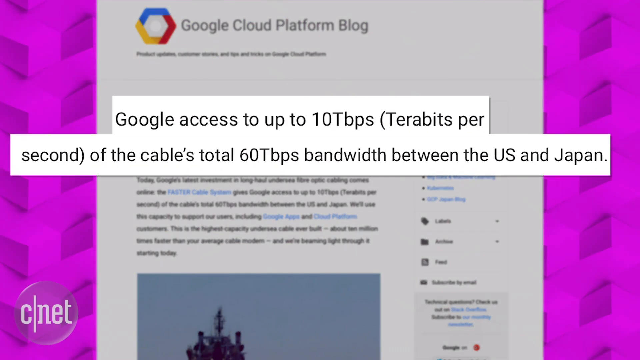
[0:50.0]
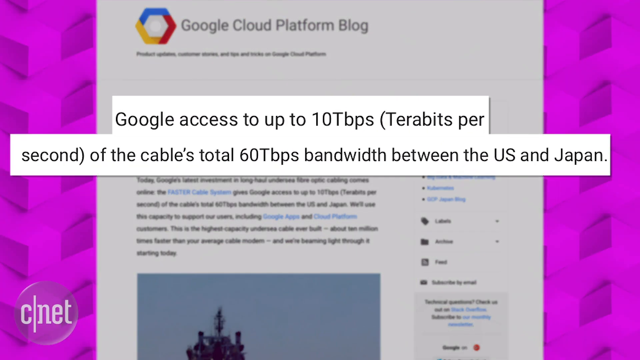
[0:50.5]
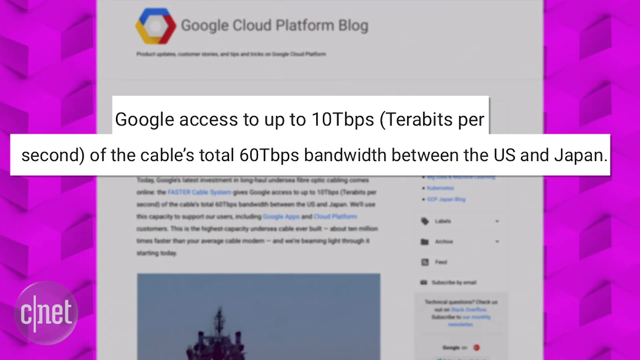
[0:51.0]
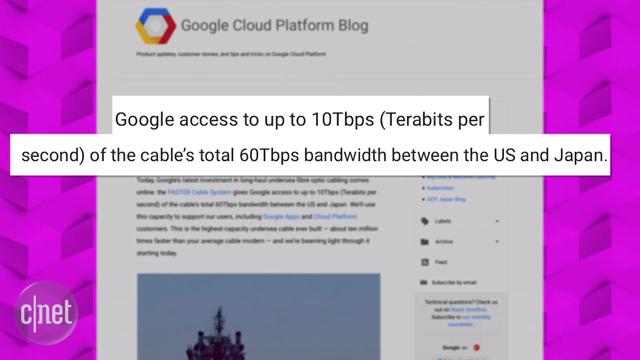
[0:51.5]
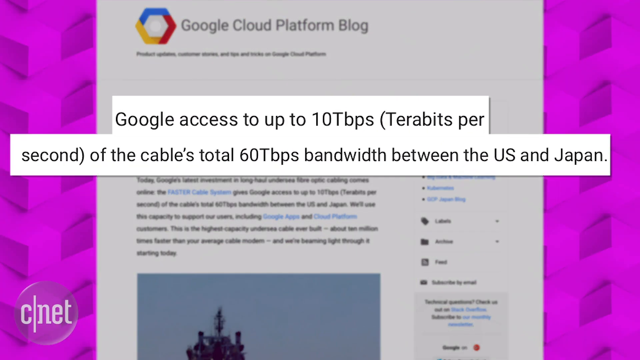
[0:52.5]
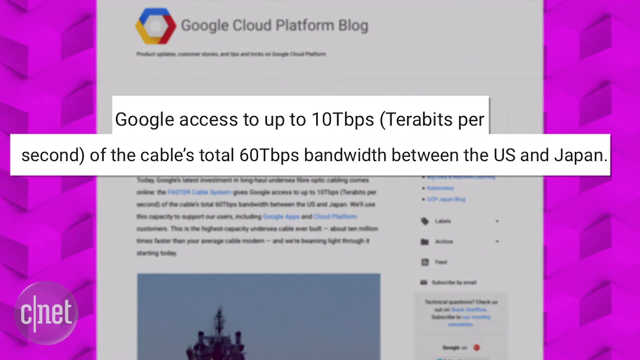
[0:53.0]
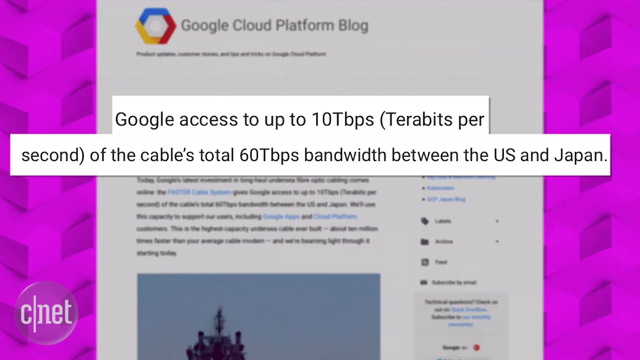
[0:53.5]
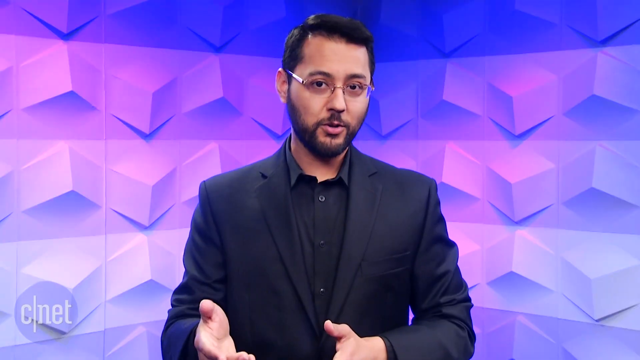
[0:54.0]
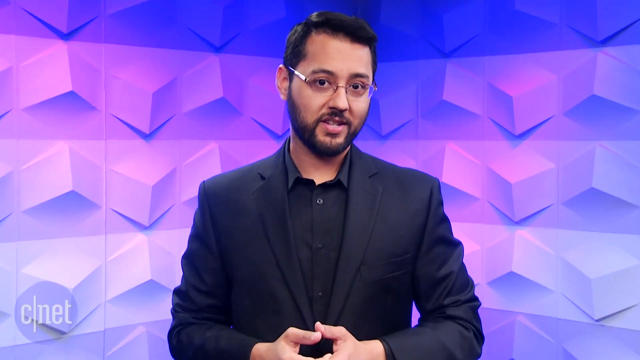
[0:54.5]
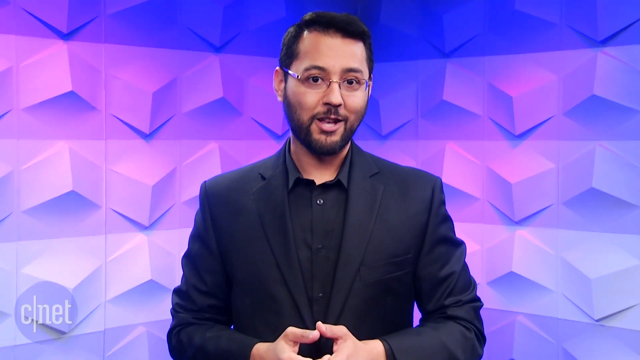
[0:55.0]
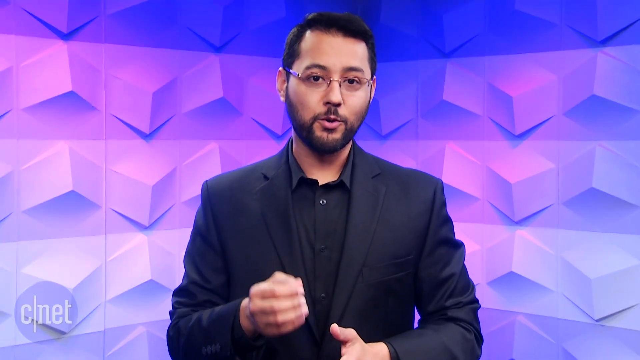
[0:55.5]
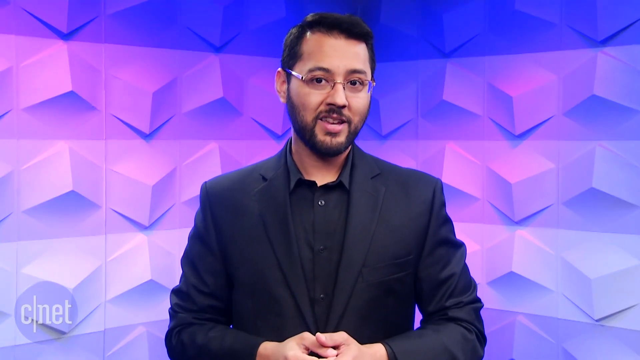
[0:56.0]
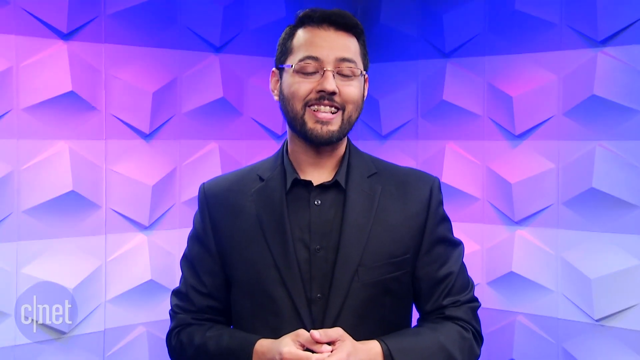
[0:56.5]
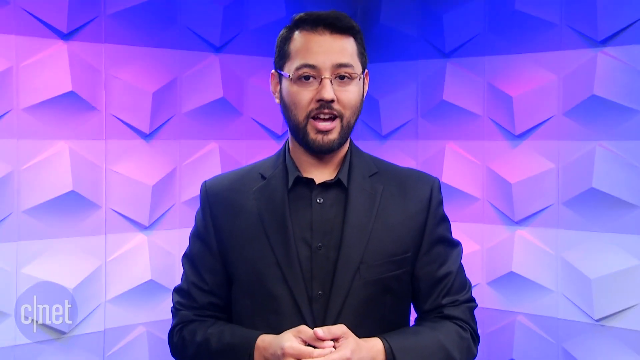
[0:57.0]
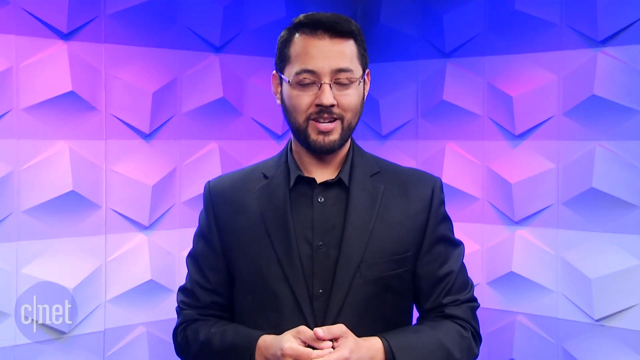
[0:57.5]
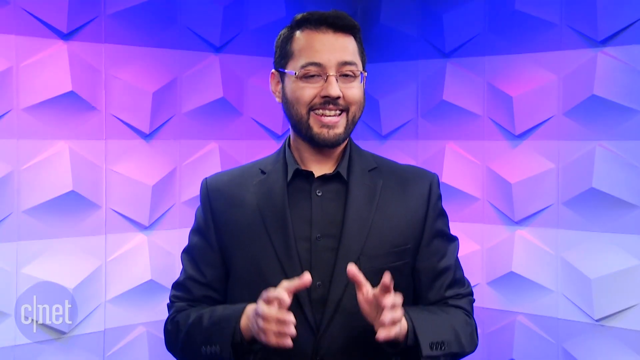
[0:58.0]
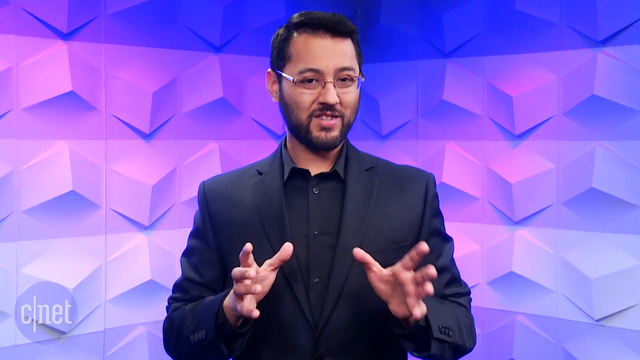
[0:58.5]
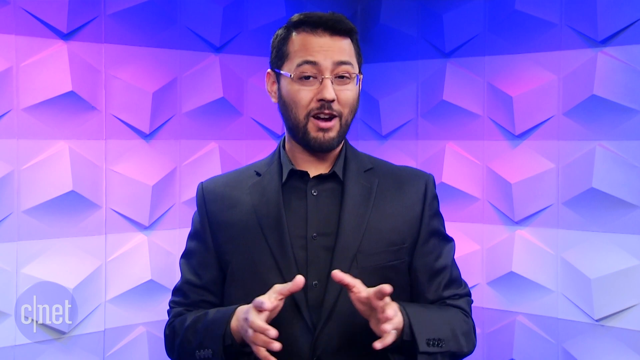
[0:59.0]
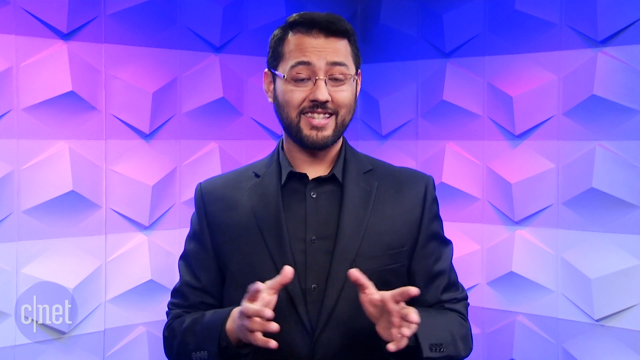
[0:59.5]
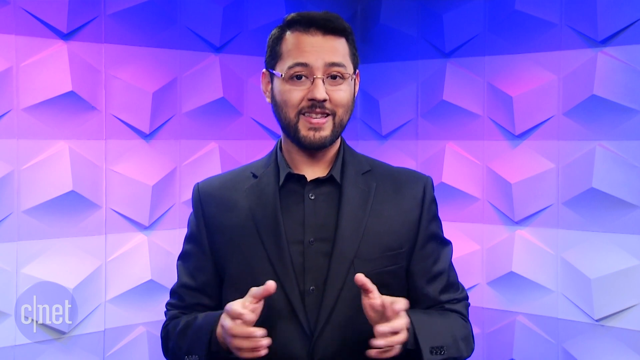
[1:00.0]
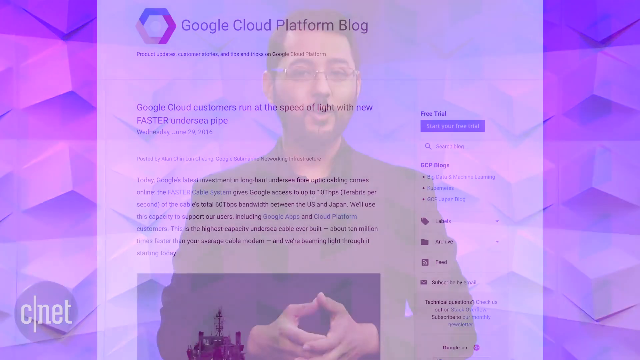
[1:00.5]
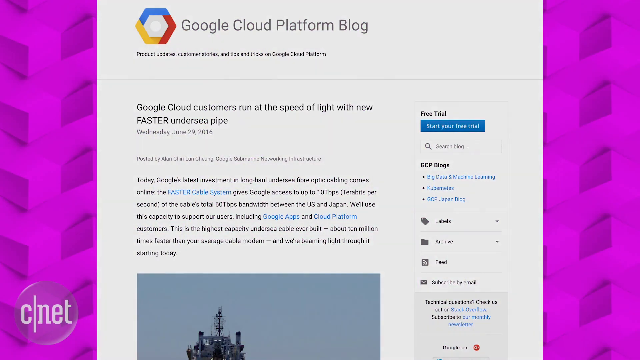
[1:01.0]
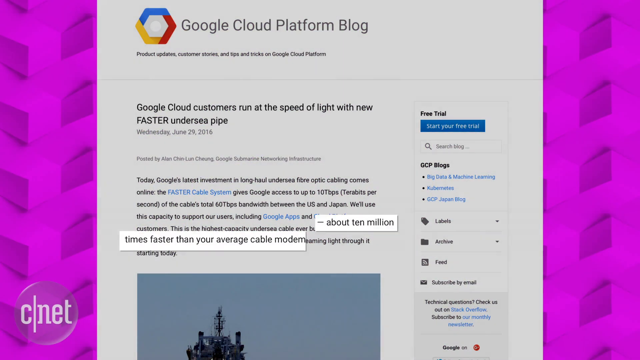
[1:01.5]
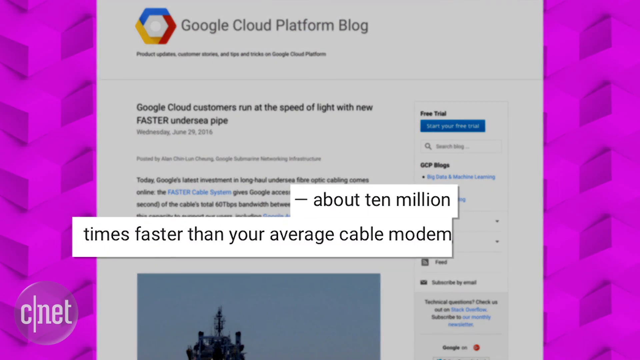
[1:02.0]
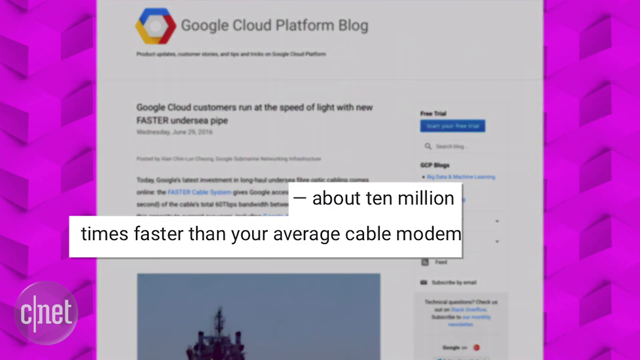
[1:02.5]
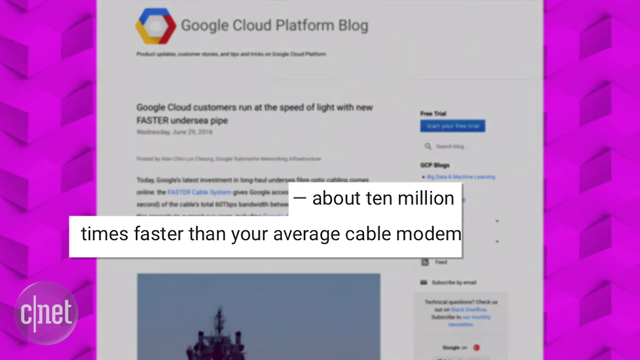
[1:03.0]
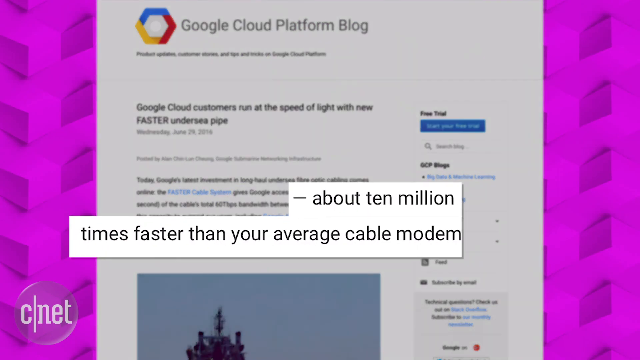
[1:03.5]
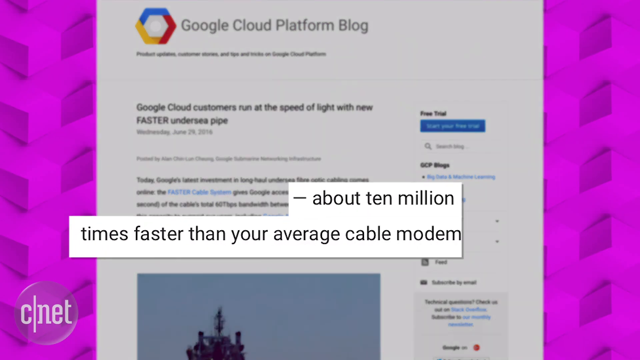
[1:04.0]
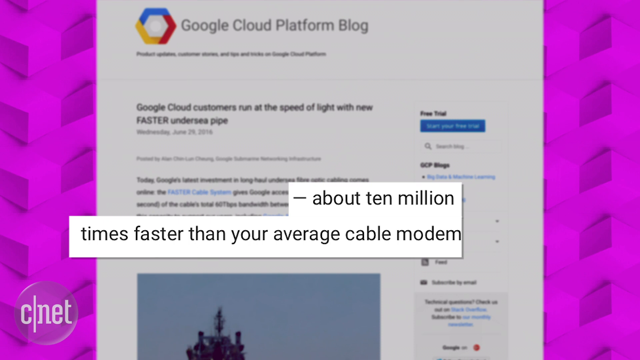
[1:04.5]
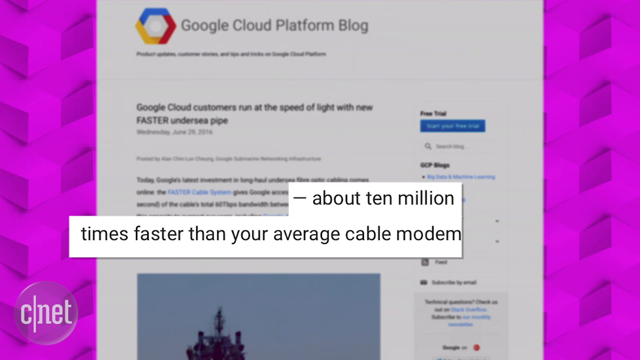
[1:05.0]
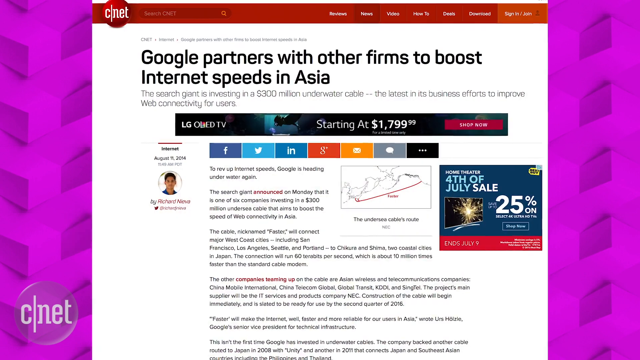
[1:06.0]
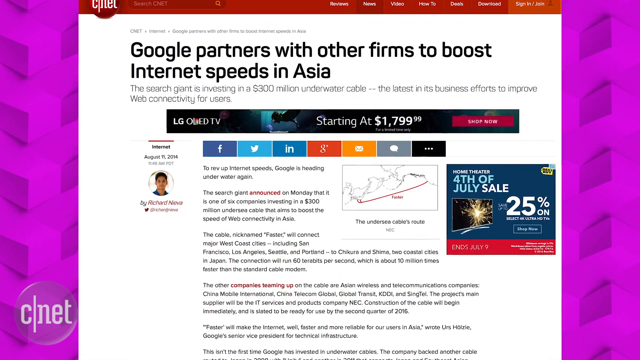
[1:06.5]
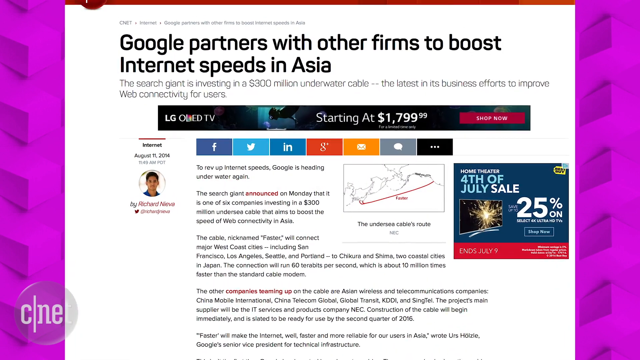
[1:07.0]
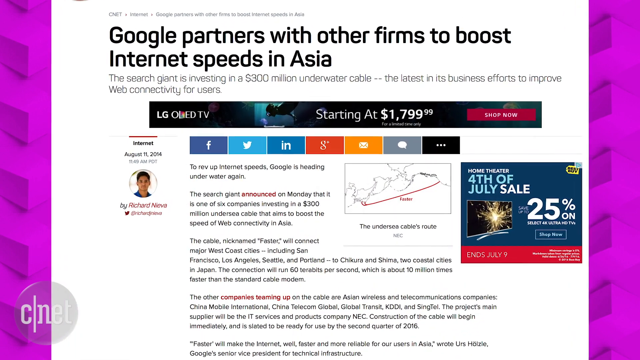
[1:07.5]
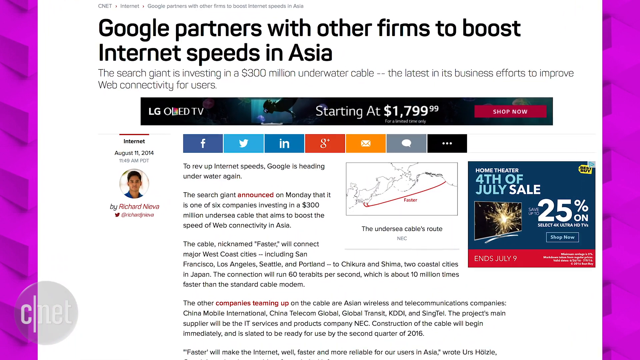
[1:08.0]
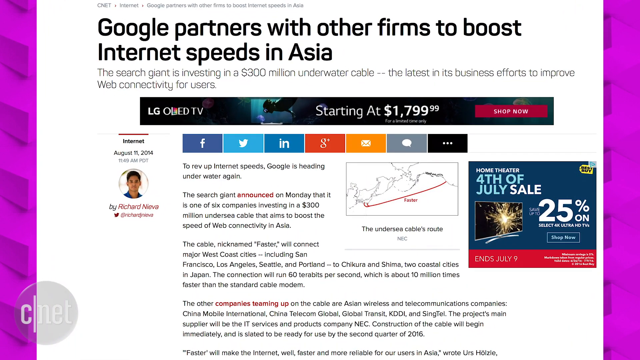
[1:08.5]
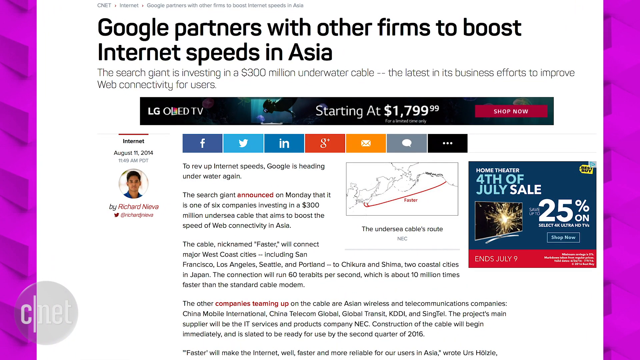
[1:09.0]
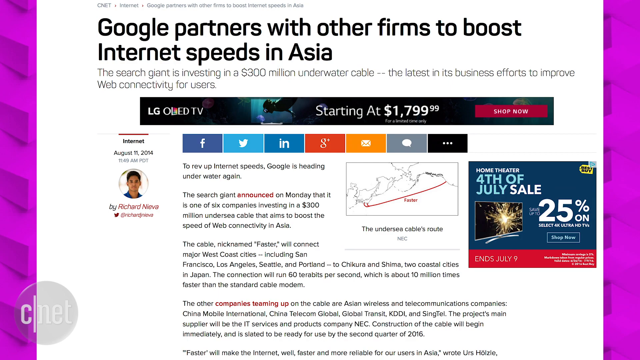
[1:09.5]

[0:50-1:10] A piece of writing on white paper is displayed, with a group of words zooming out. The heading reads "Google Cloud Platform blog," and a highlighted passage zooms out until it can be seen clearly: "Google access up to 10 T-PBS terabytes per second of the cable's total 60 T-PBS bandwidth between the US and Japan." The setting changes to the studio, where the man is explaining, and then back to the paper, where other words zoom out: "about 10 million times faster than your average cable modem." Another piece of writing, possibly from a website, also zooms out, with the headline "Google partners with other firms to boost internet speeds in Asia."